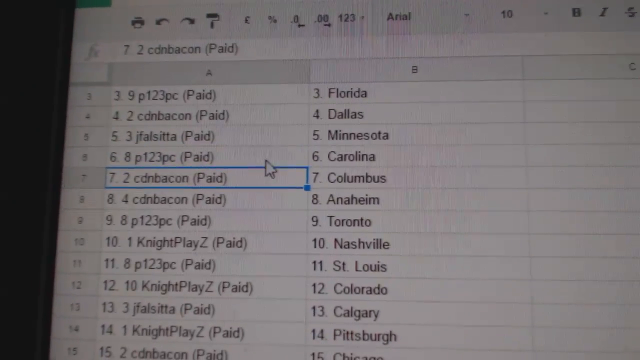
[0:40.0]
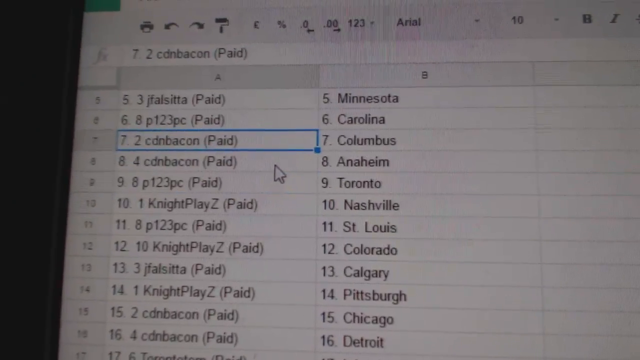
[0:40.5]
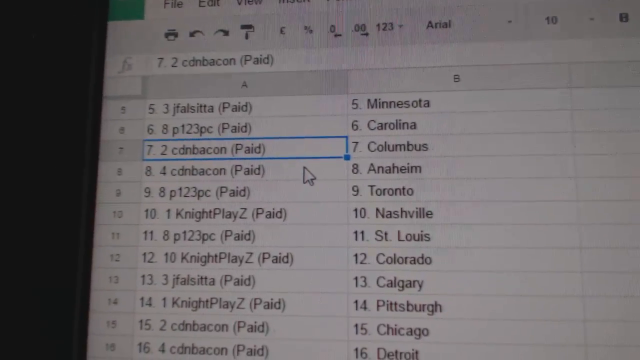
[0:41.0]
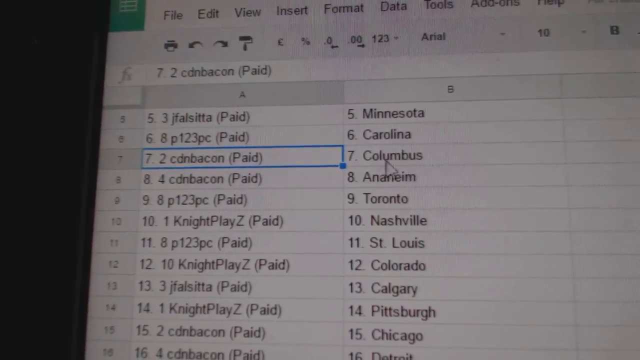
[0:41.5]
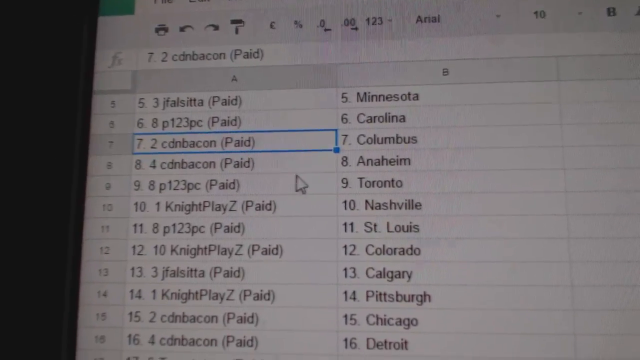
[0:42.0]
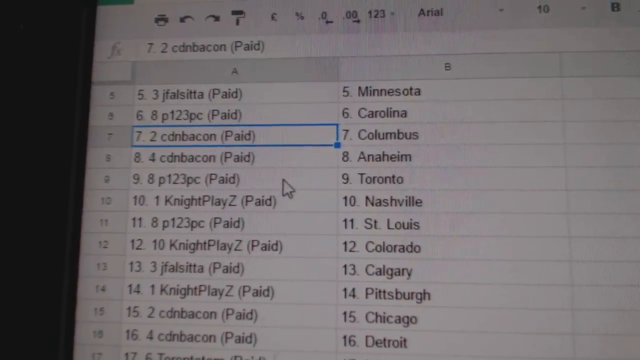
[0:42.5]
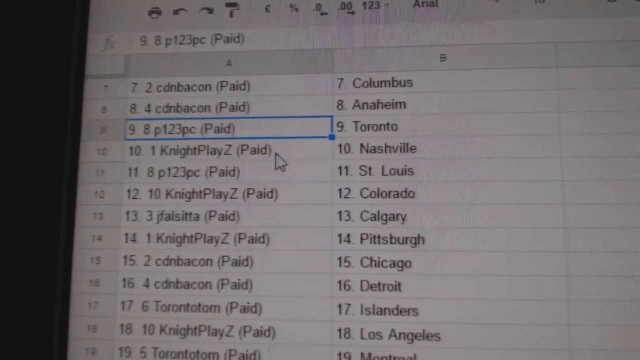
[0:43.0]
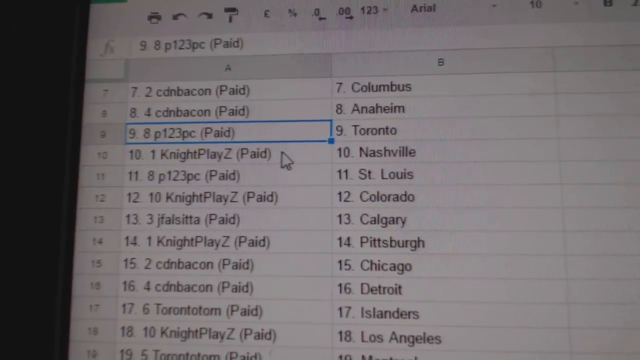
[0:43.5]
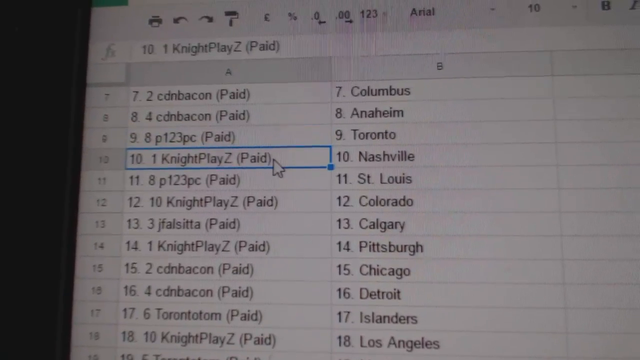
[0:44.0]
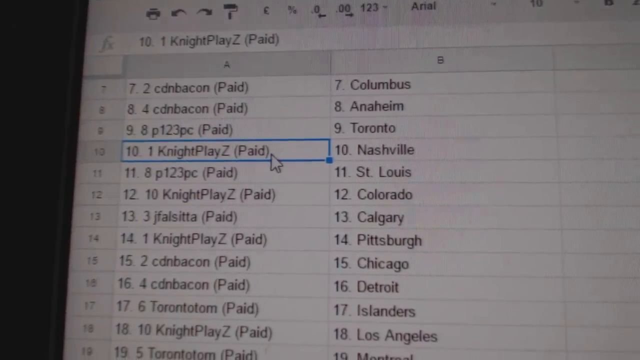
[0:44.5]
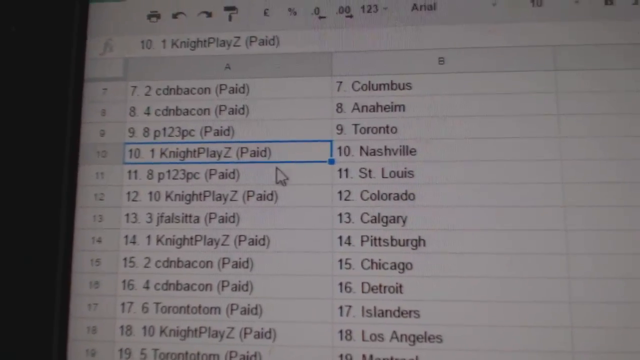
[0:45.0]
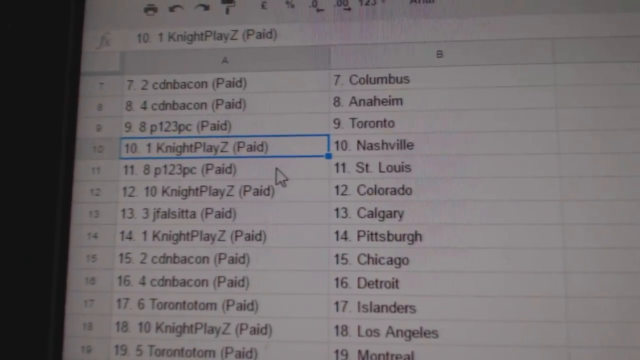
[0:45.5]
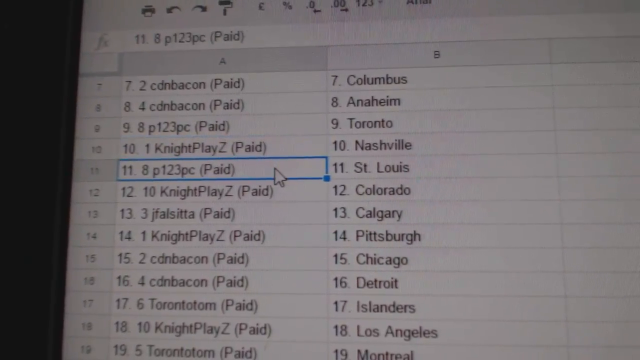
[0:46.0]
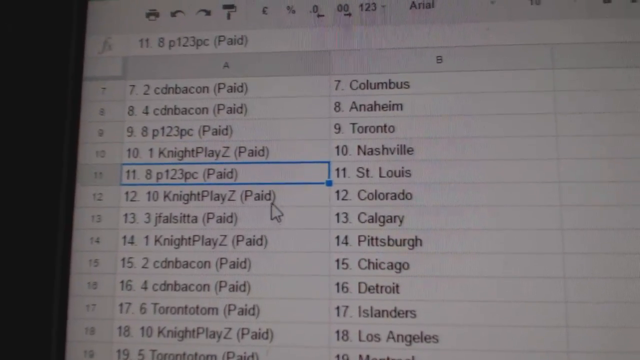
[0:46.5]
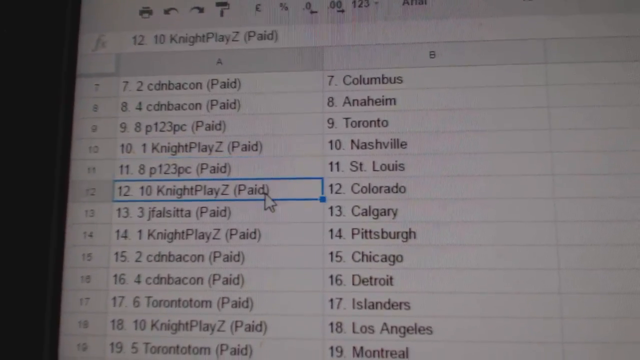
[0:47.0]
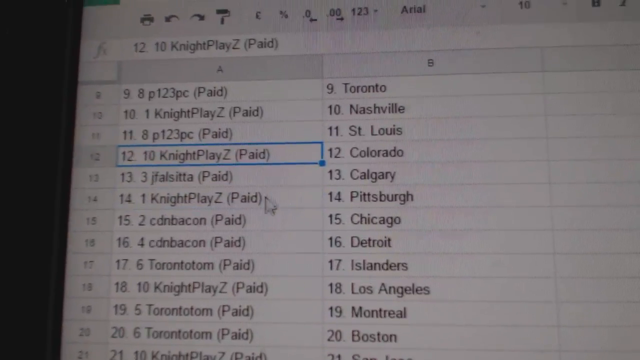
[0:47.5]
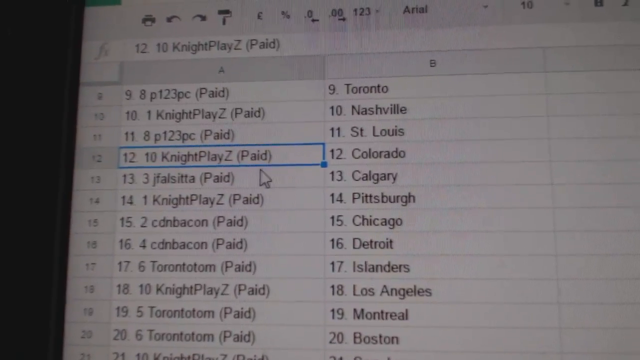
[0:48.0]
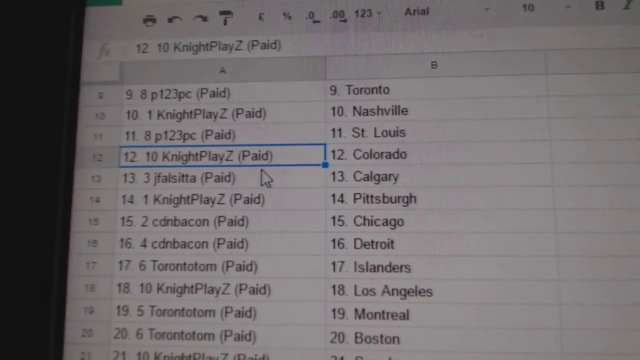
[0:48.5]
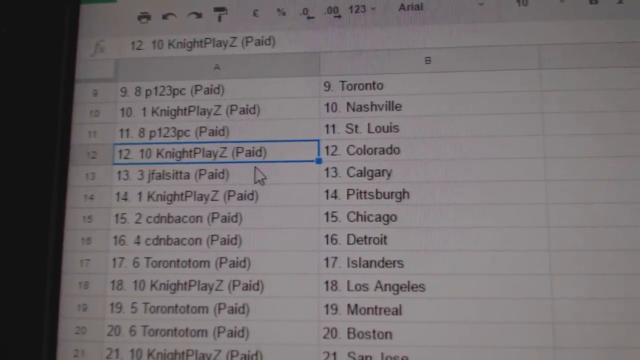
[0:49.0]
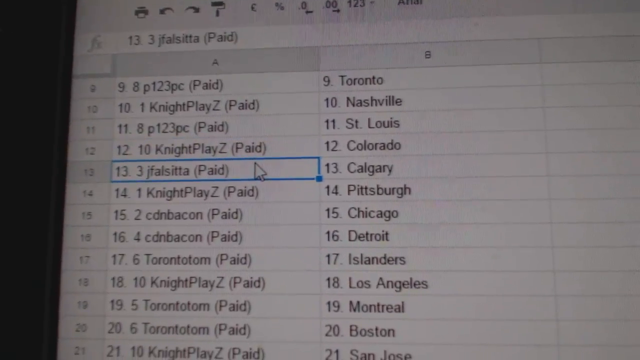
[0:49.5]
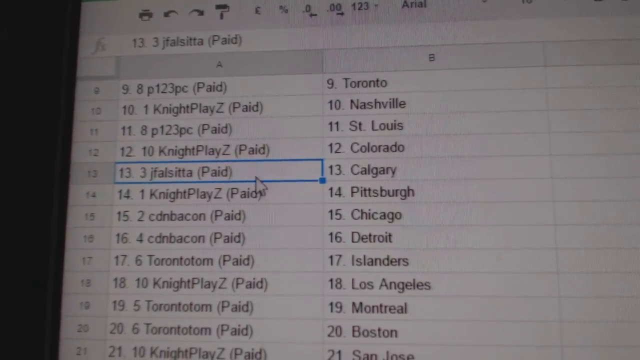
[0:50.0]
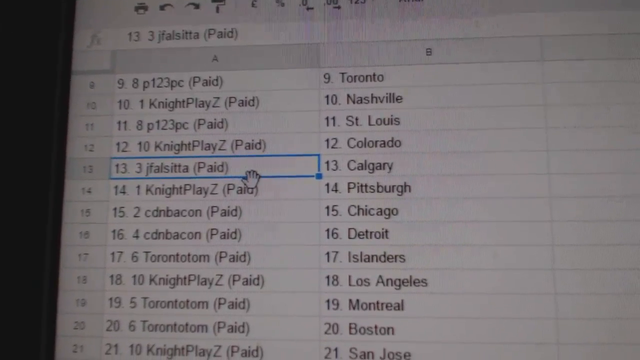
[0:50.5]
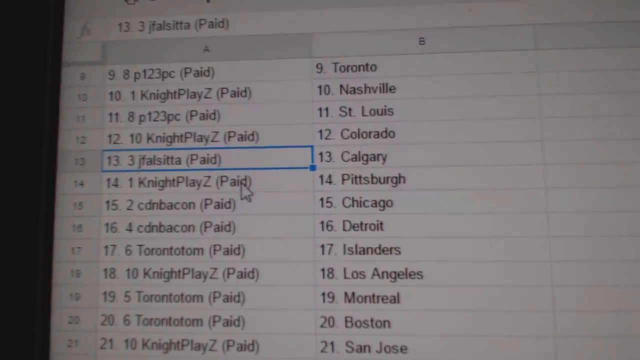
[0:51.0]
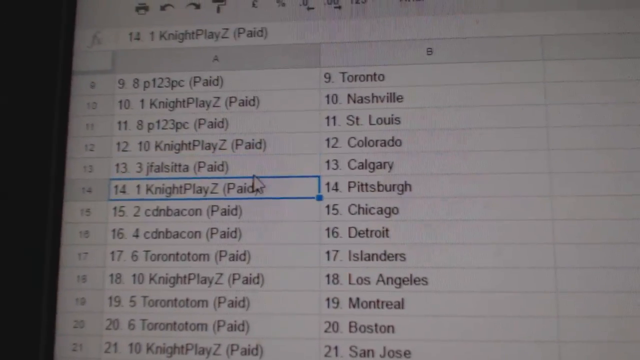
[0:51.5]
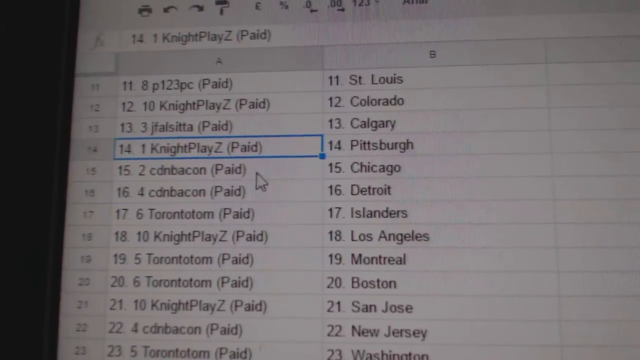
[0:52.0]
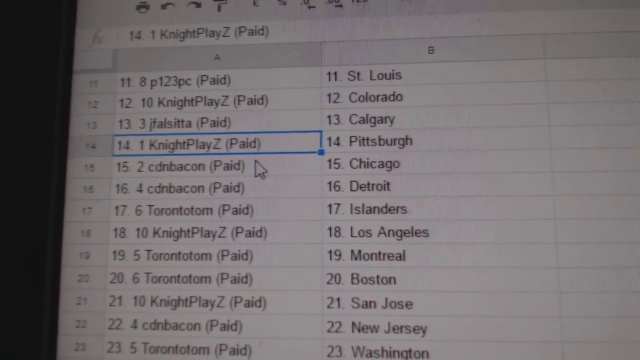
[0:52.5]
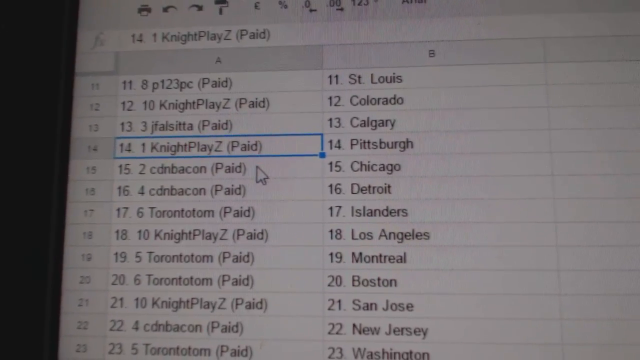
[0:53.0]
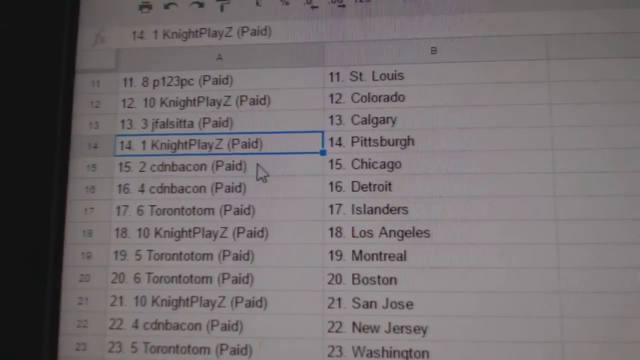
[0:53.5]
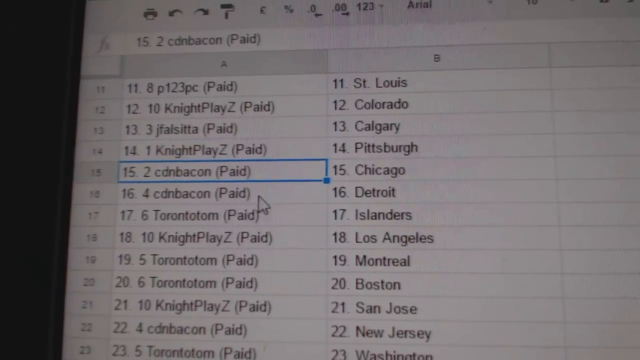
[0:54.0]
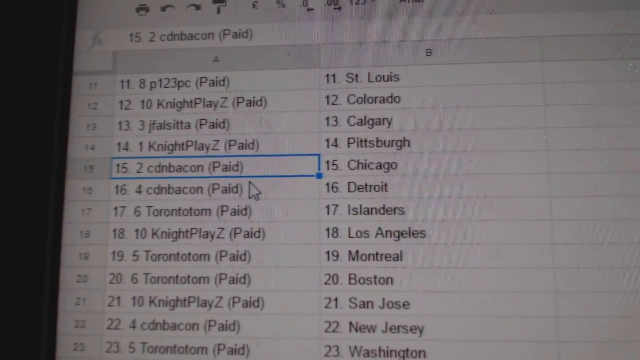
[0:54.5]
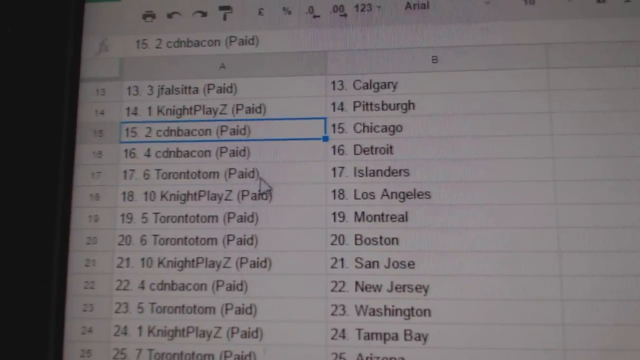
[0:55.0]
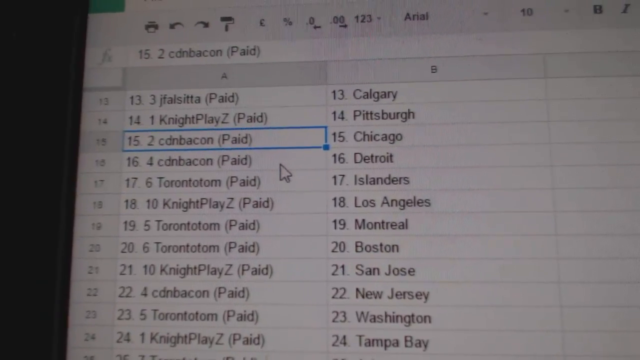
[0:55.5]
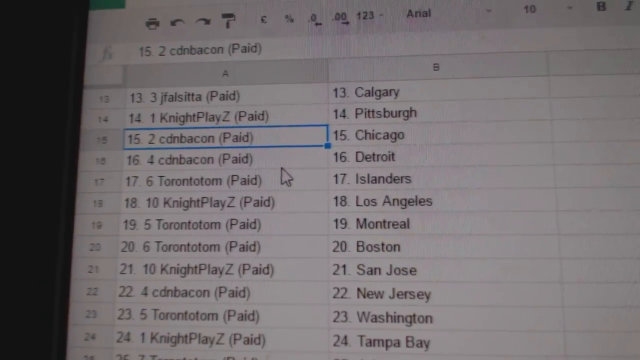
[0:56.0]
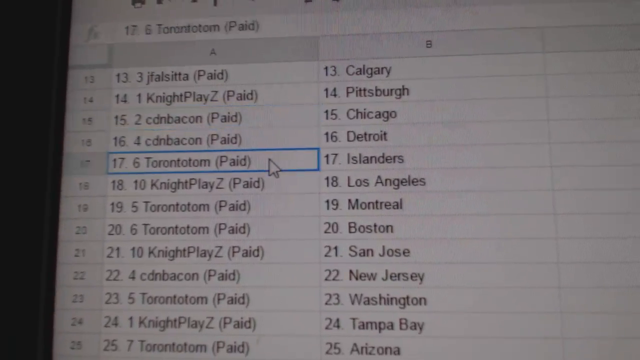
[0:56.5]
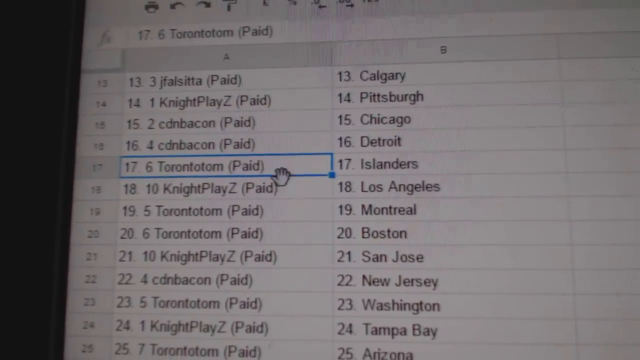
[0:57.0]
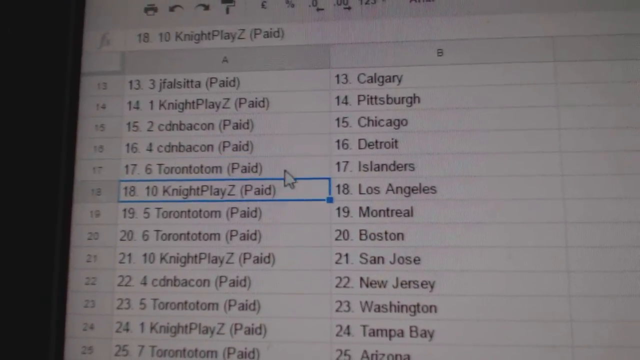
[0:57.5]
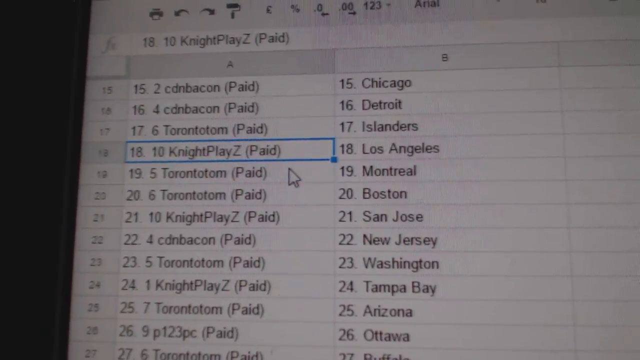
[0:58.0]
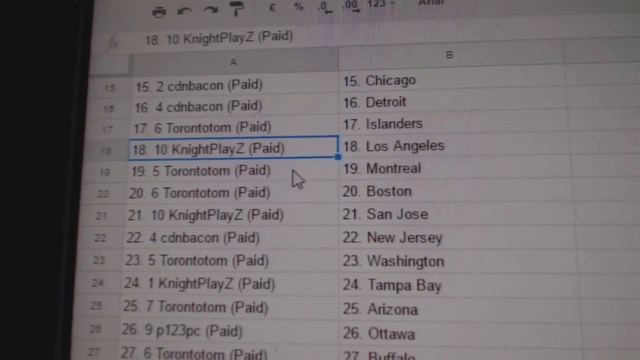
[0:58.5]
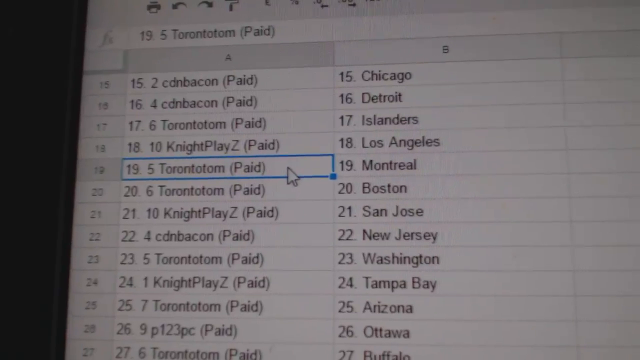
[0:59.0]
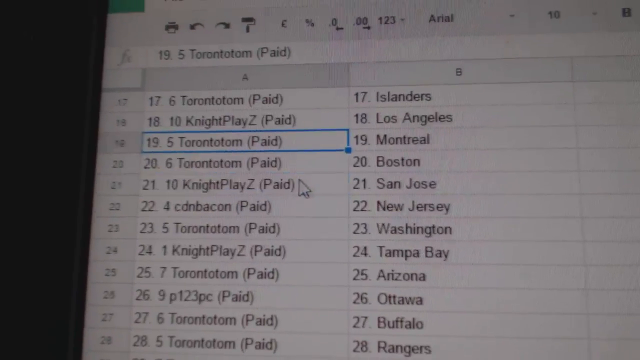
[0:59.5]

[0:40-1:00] As he clicks cells such as A7, a blue border appears around each one, with a small blue square at the bottom right of the border. He scrolls up a little, looks like he is going to go to Columbus, but instead goes to cell A9, then scrolls down and clicks A10 for a moment, then A11, A12 and A13. The text field above column A shows the same information as the selected cell, and A14 is also shown above. He keeps clicking through different cells in column A. At the top, the very top of the Google spreadsheet is not visible; only the area right underneath the File and Edit buttons shows, with a printer icon, undo and redo buttons, a roller icon to the right, an icon for equations, percentages, decimal buttons for .0 and .00, and the font style Arial with a drop-down menu.